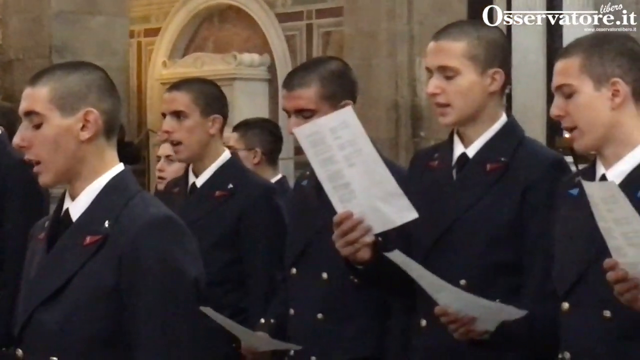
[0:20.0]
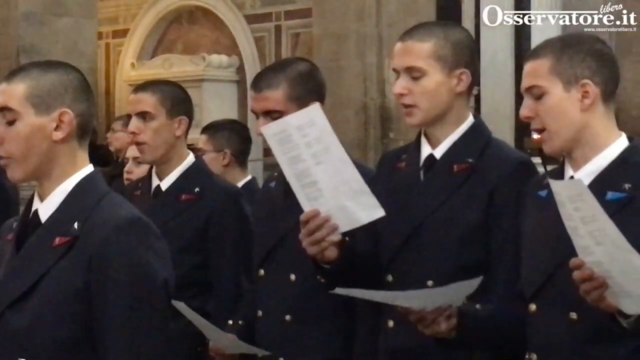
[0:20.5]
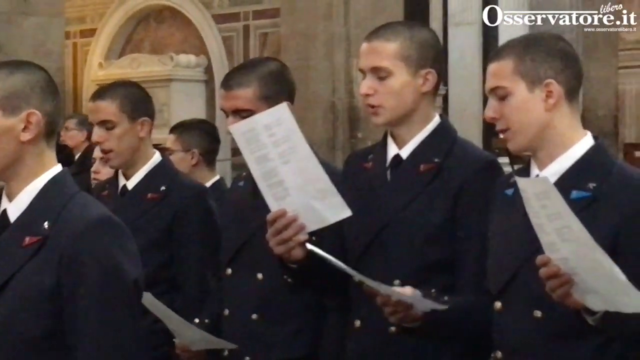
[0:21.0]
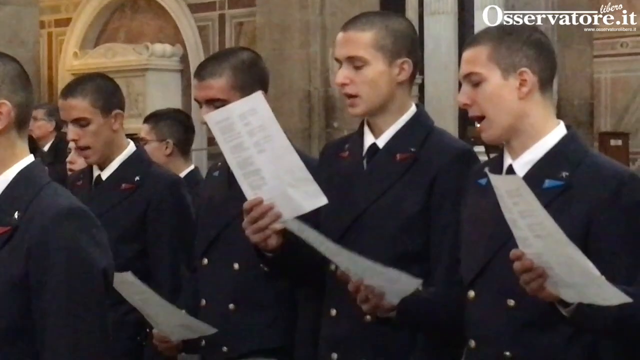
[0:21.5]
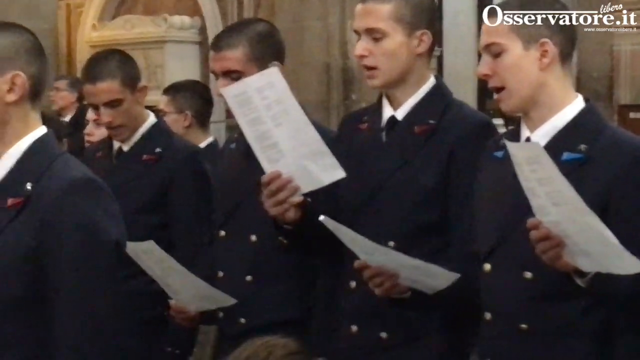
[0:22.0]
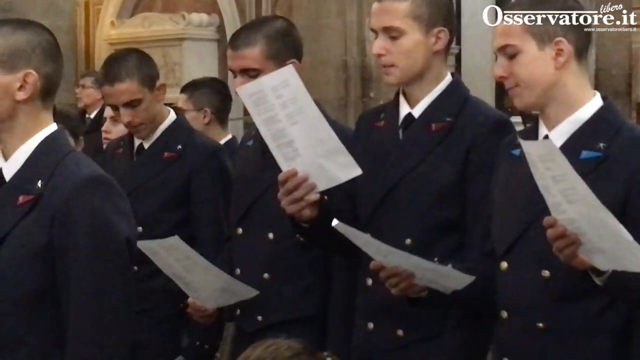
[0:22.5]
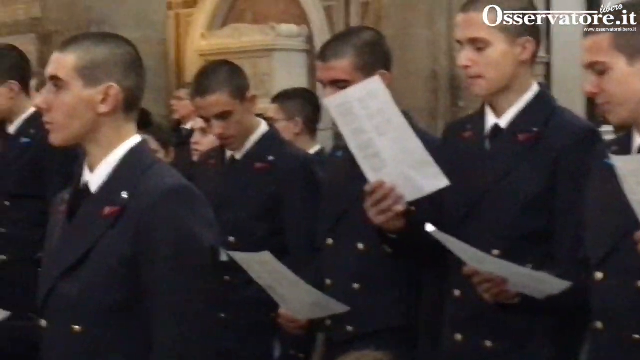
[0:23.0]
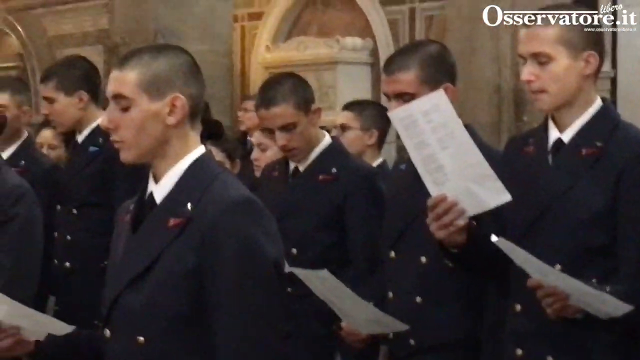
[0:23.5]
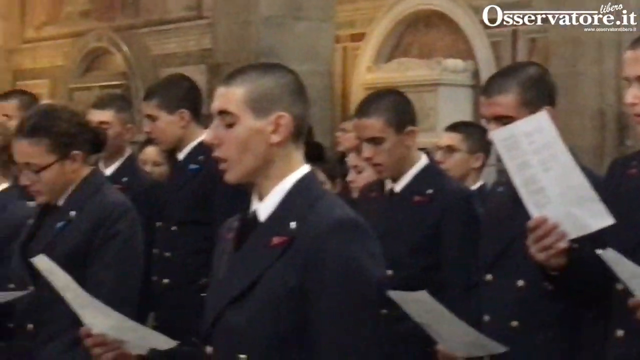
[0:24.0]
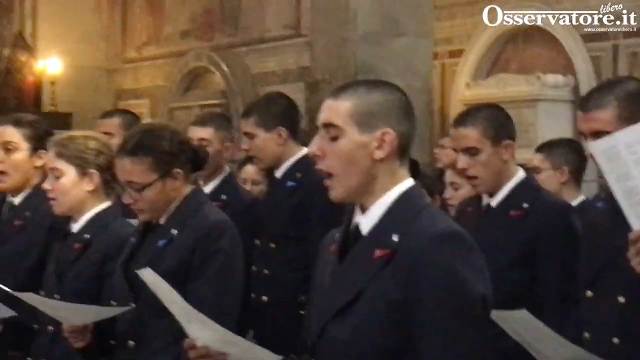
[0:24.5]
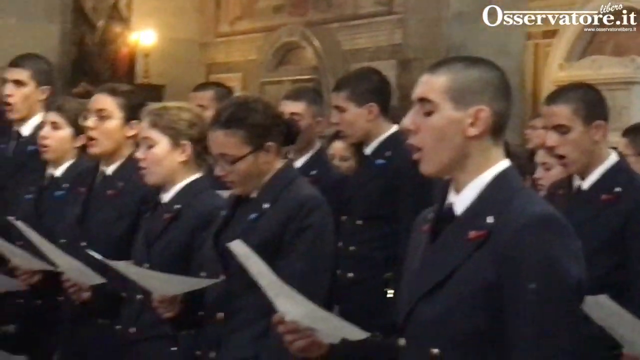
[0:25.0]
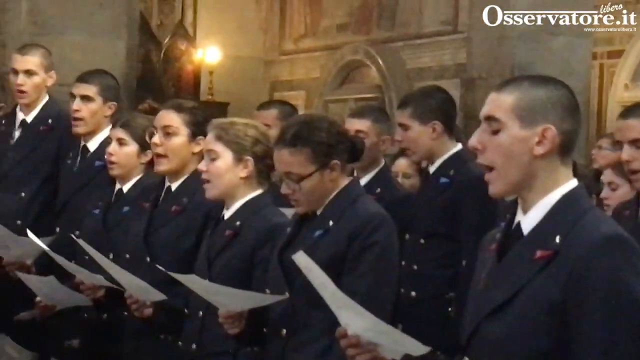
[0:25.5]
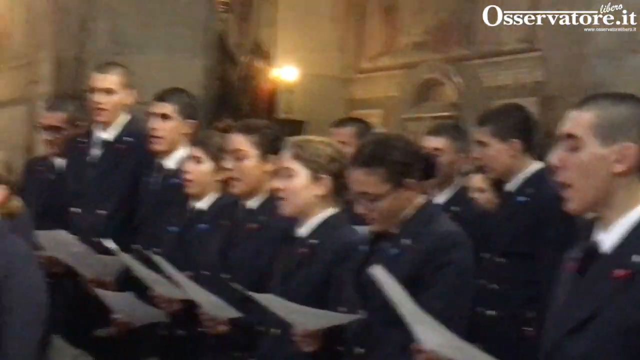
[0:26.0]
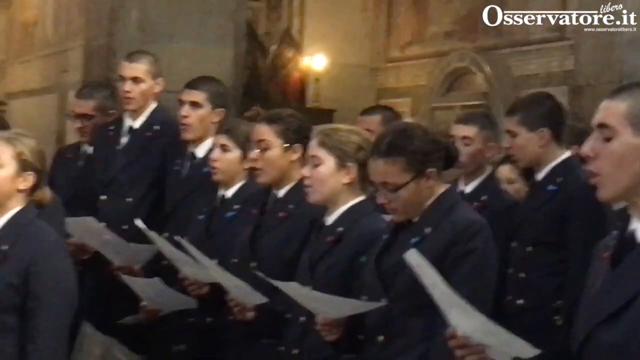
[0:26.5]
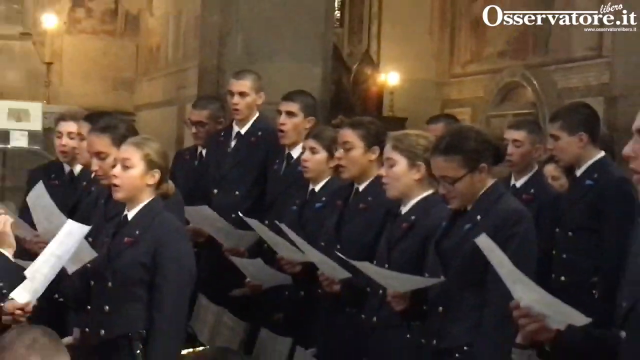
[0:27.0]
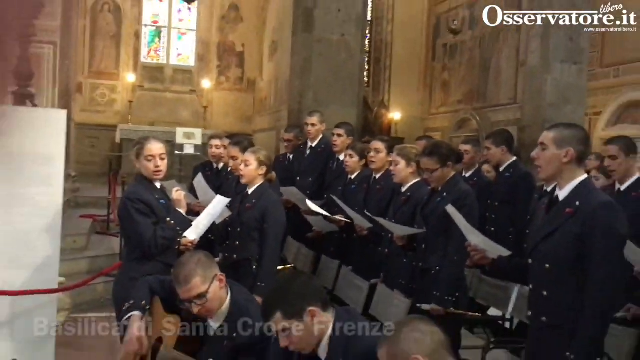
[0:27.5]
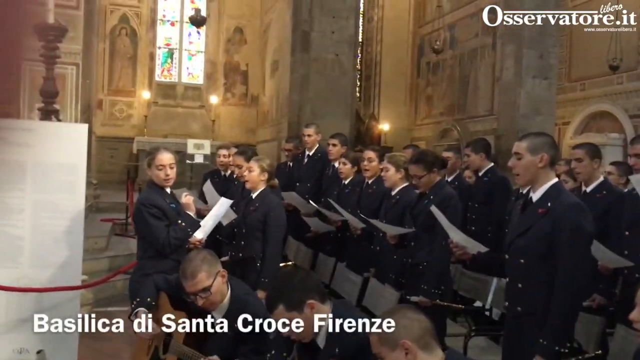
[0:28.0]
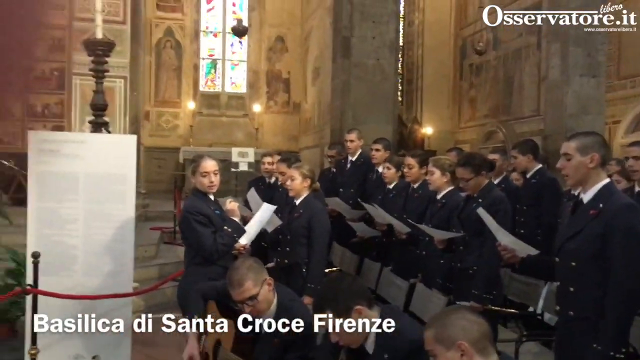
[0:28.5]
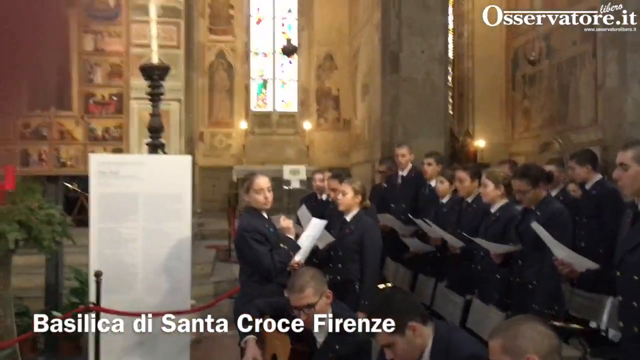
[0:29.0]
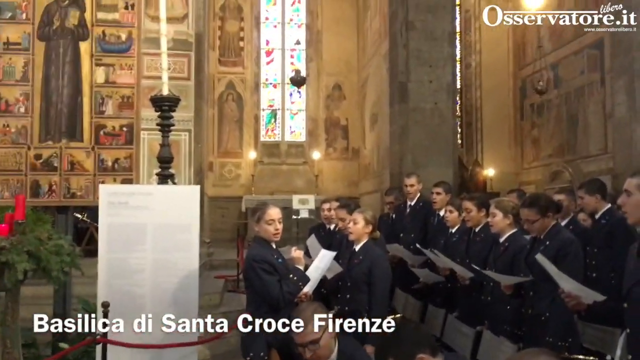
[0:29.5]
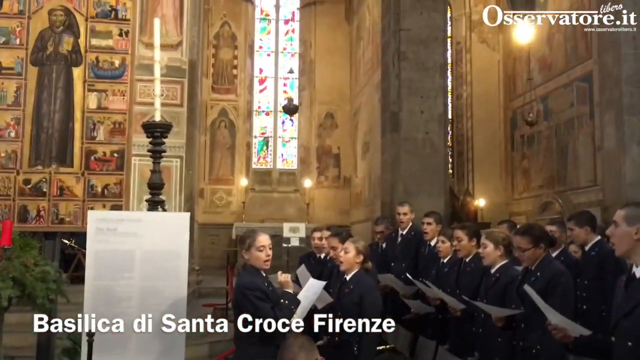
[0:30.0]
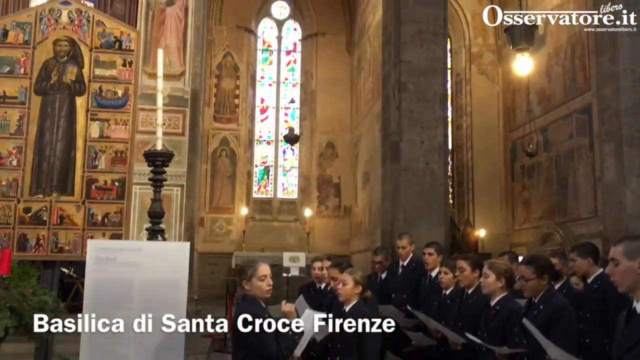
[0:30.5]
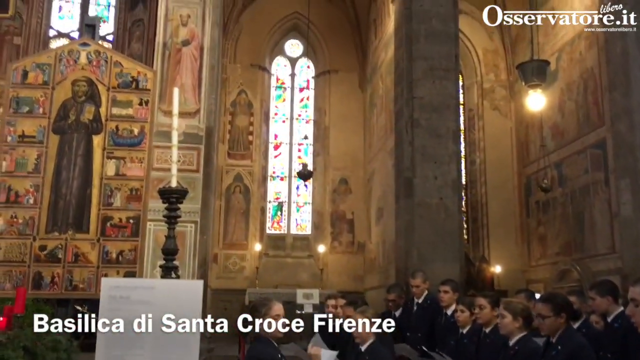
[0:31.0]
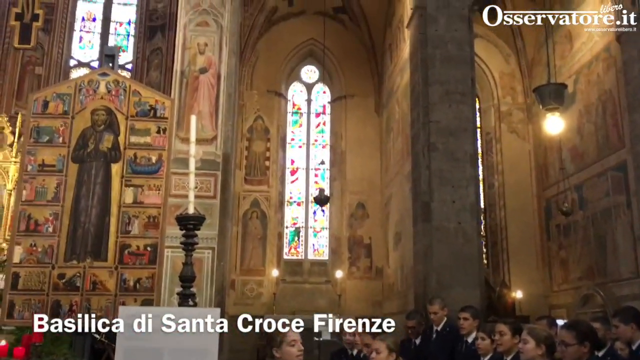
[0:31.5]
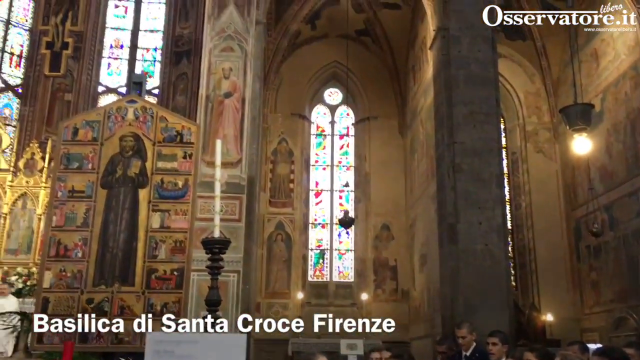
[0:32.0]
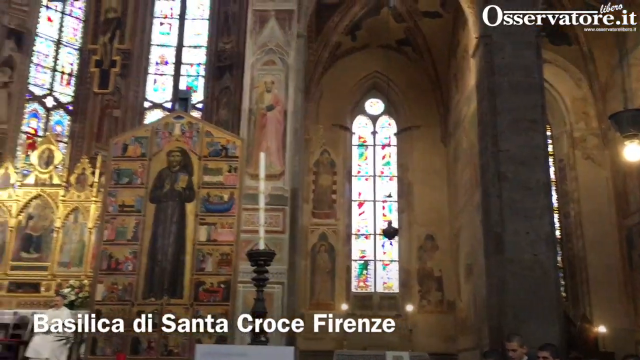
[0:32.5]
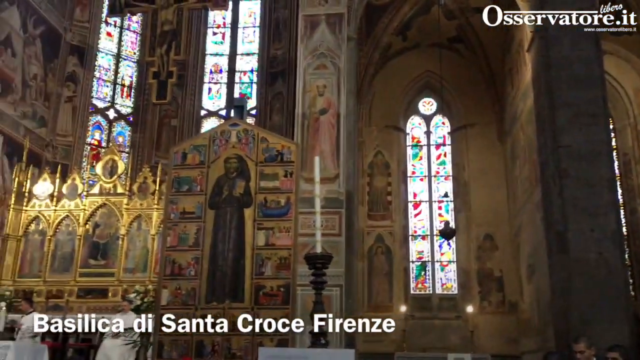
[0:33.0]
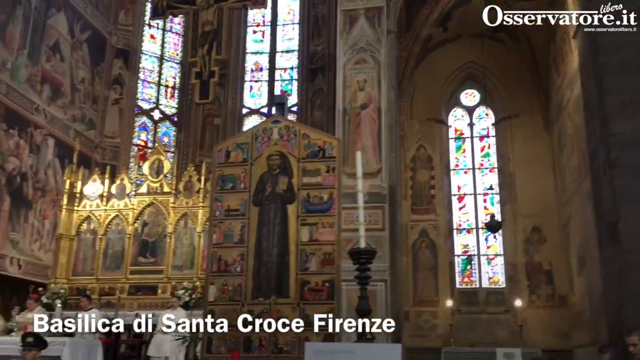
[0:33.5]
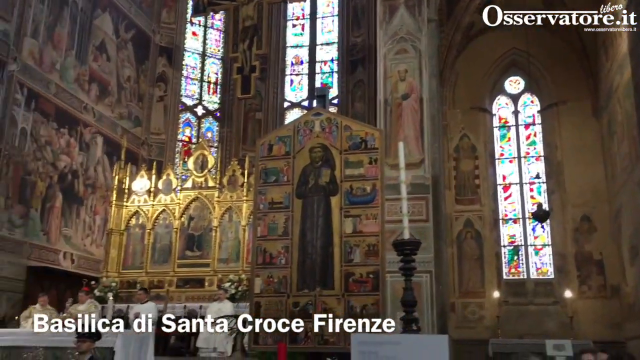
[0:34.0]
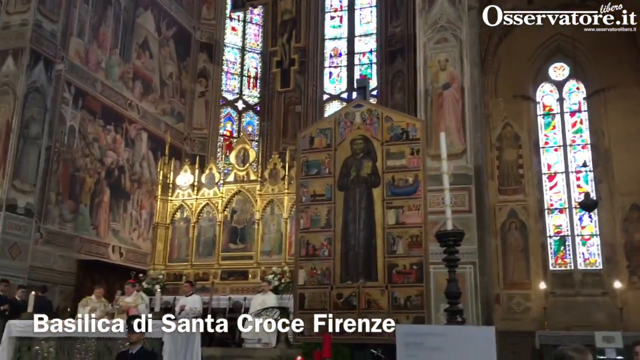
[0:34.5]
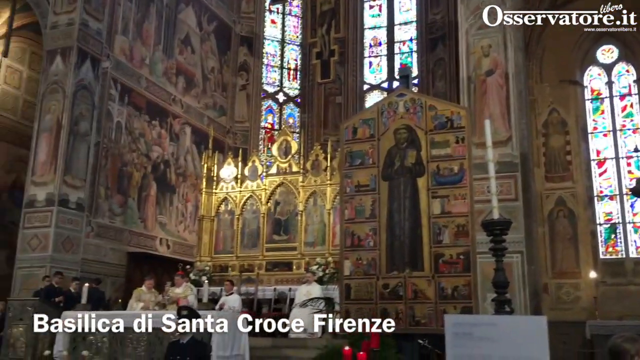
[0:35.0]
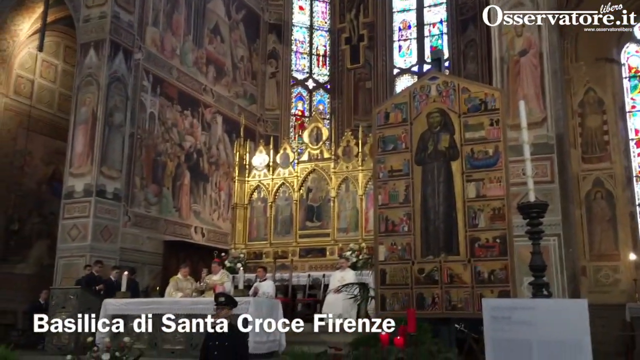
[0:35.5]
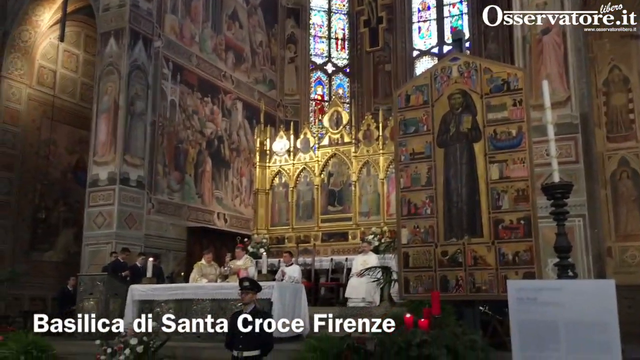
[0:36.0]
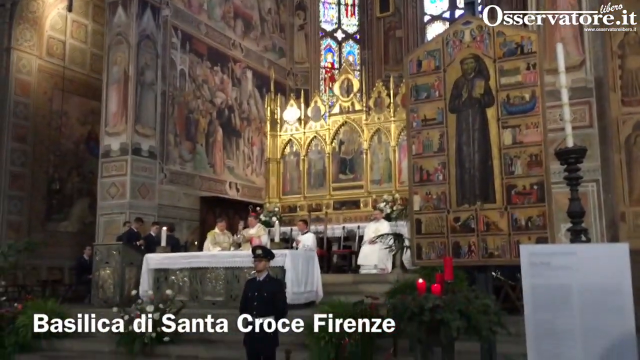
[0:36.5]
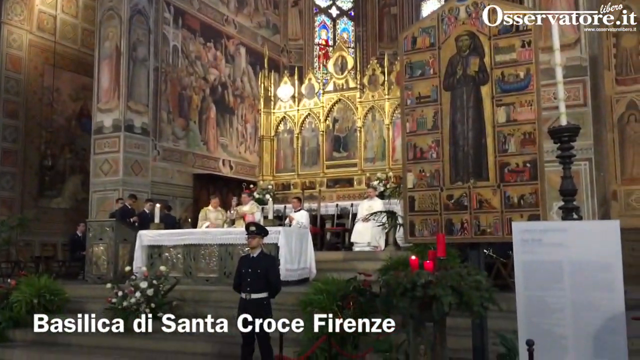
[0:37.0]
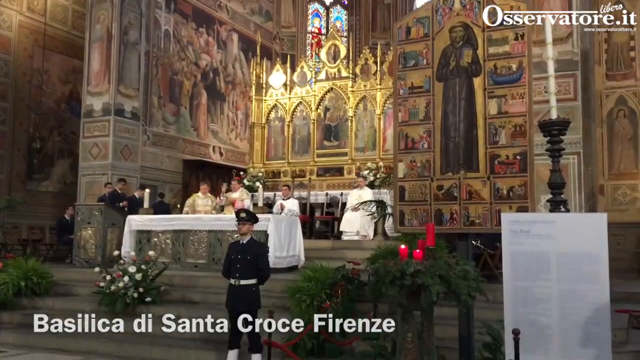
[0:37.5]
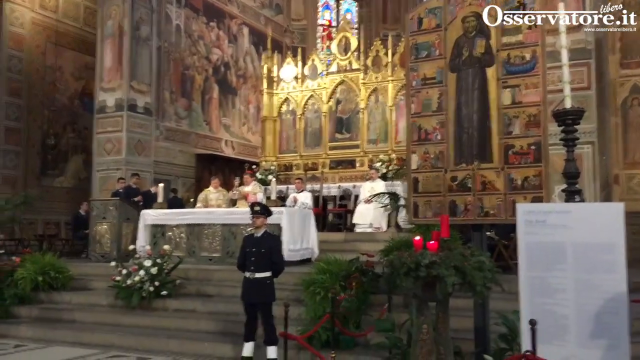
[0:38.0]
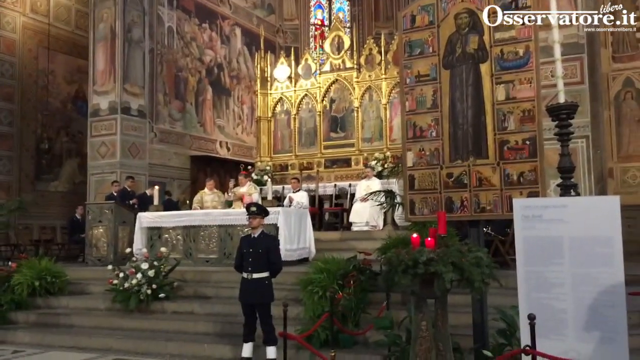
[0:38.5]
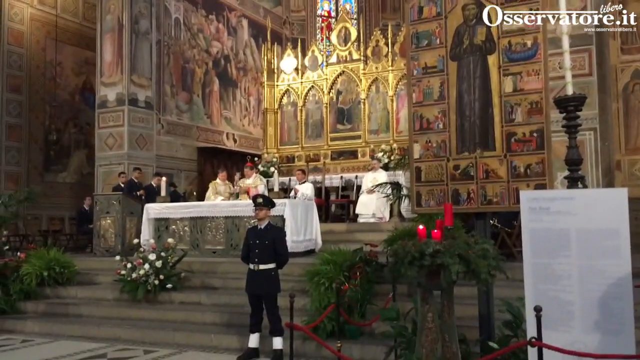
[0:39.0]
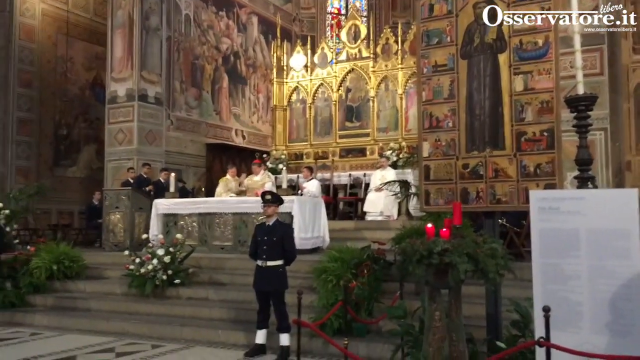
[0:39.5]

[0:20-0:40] The singers continue singing as the camera pans roughly right to left, then pans out. Words appear on the screen: "Basilica di Santa Croce Ferenze." Views of the church follow, showing a structure with a lot of gold, stone and granite, and there is a focus on the stage; the singers appear to be singing at a church procession. In the top right, it says "osservatori.it." Candles, crosses and many etchings on the stone are visible. On the stage, there appear to be three leaders and/or priests leading the service. The camera focuses on the singers and pans to the left, revealing the inside of the church. Most of the church leaders are wearing white, and someone in front of the stage seems to be wearing black.